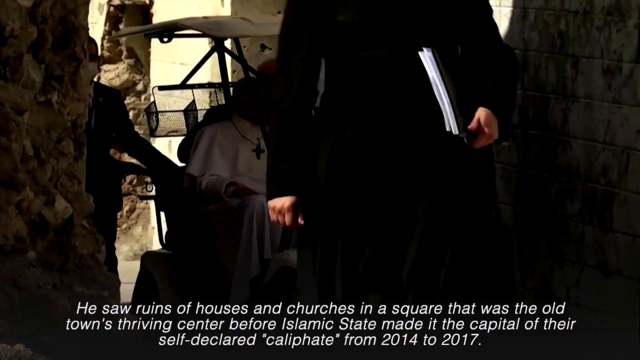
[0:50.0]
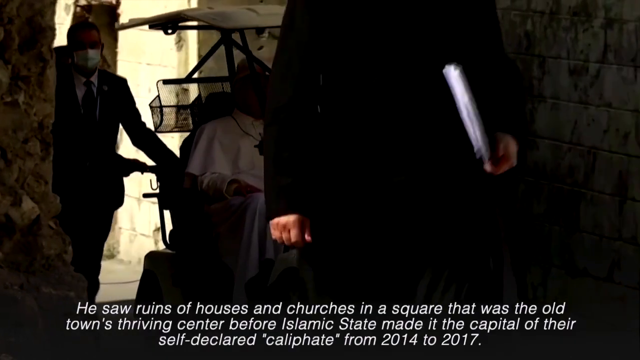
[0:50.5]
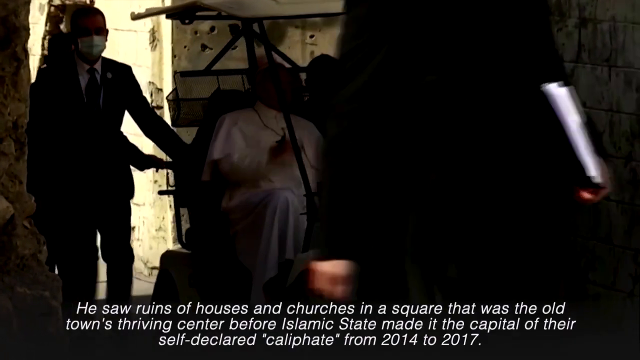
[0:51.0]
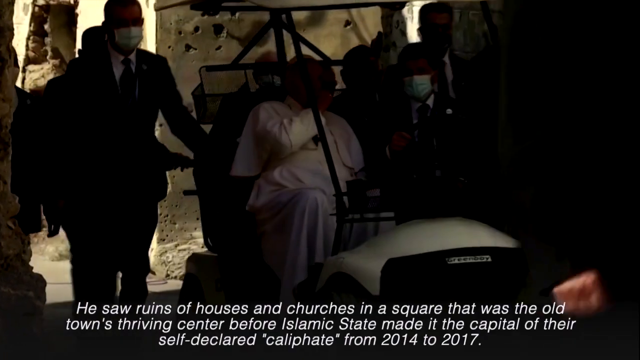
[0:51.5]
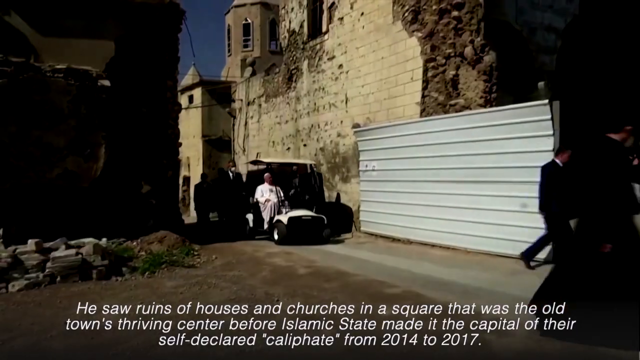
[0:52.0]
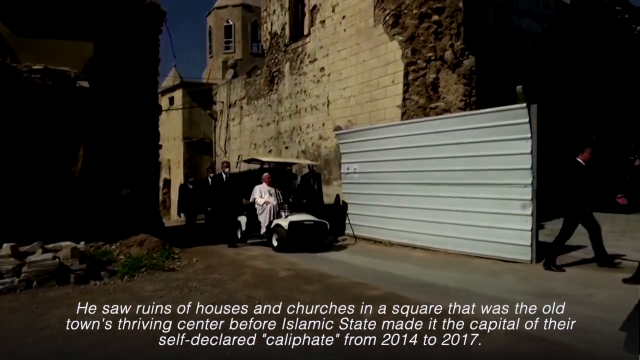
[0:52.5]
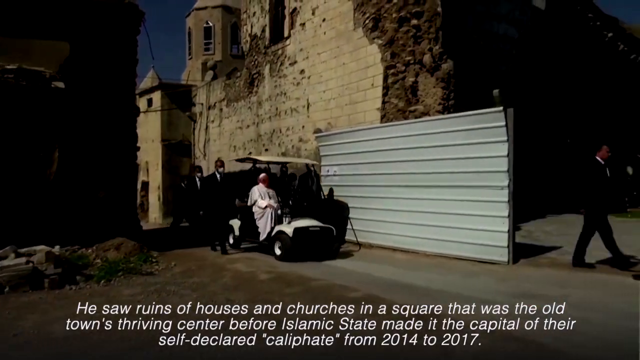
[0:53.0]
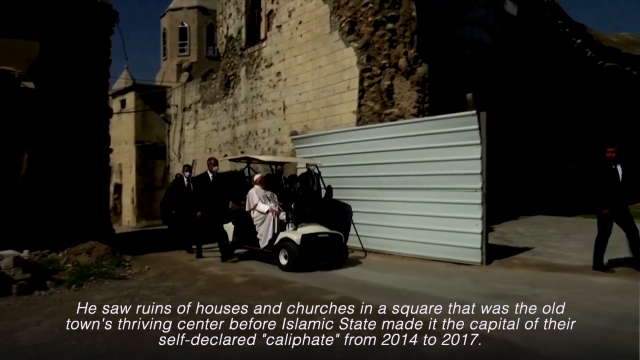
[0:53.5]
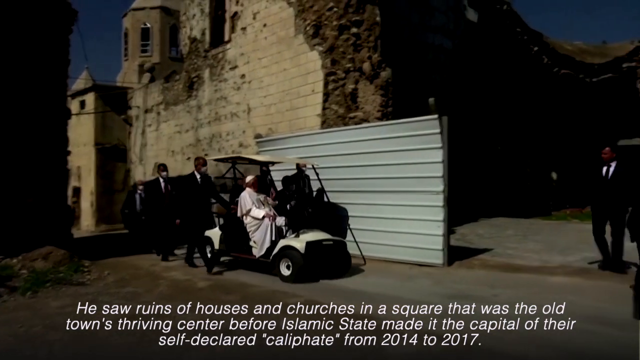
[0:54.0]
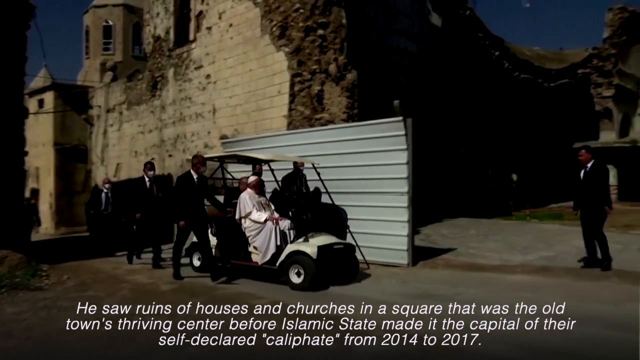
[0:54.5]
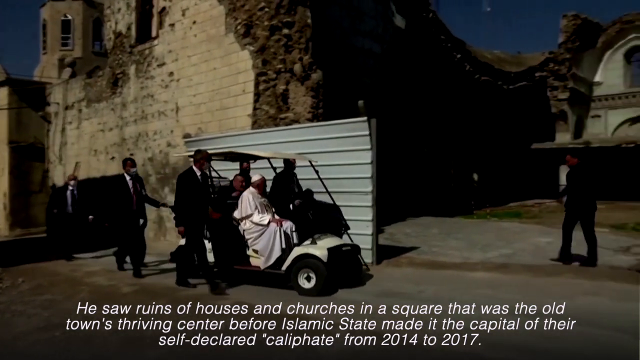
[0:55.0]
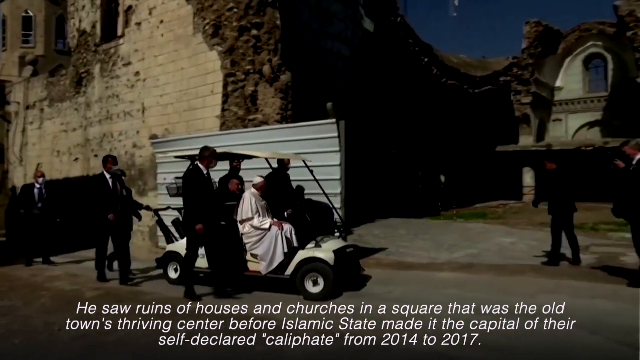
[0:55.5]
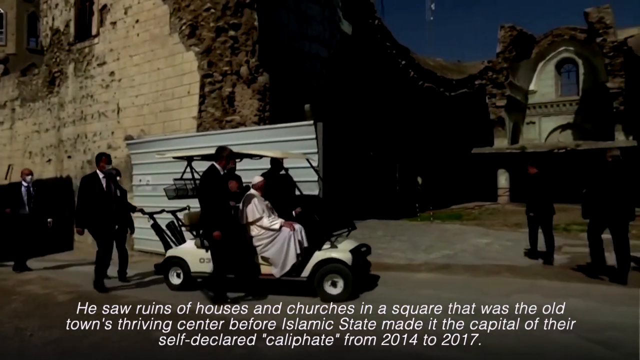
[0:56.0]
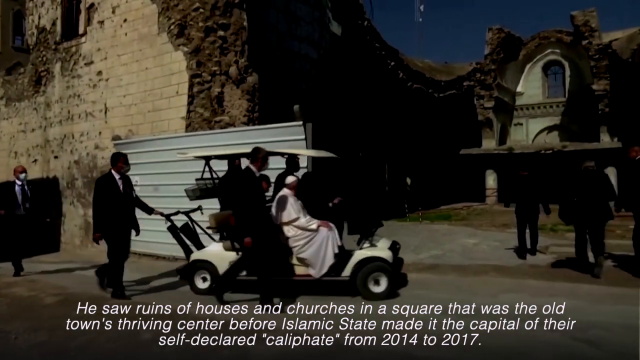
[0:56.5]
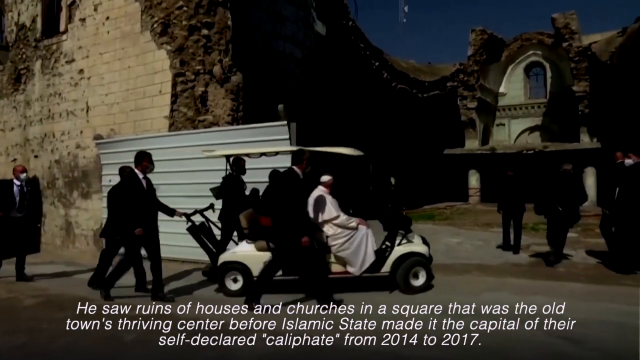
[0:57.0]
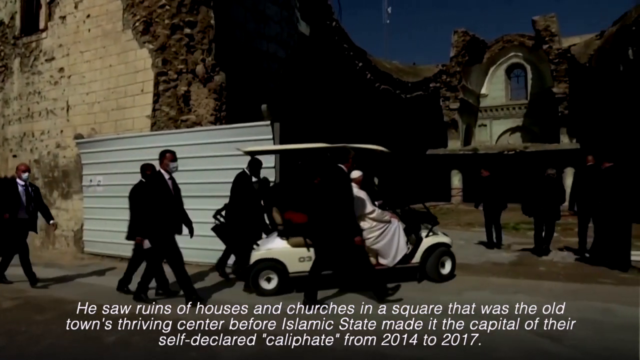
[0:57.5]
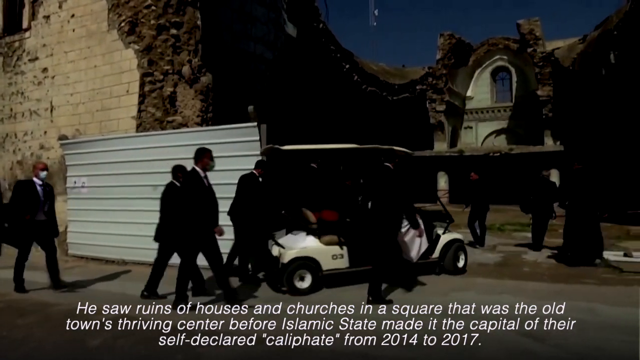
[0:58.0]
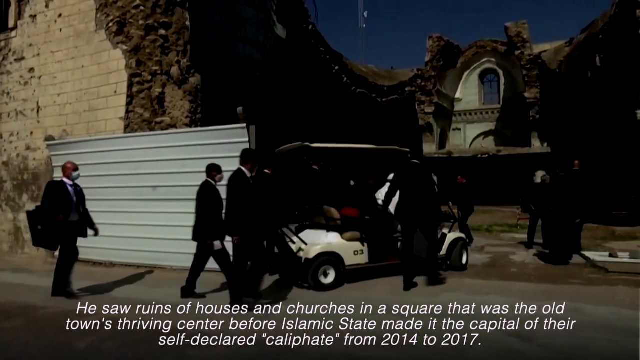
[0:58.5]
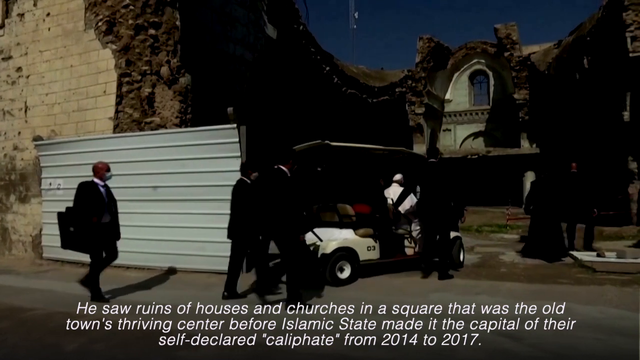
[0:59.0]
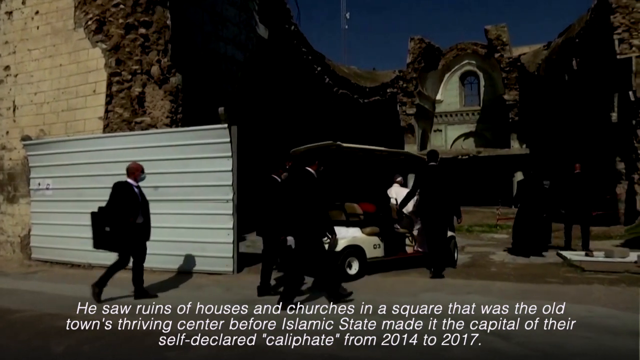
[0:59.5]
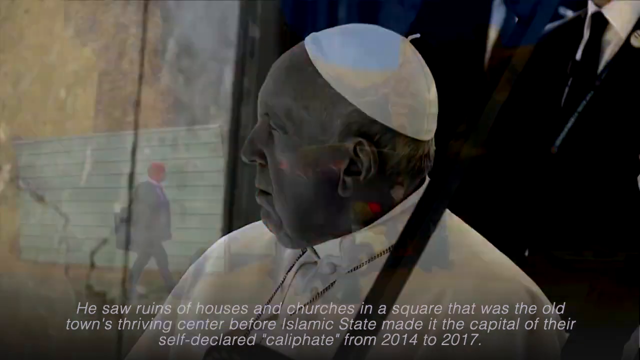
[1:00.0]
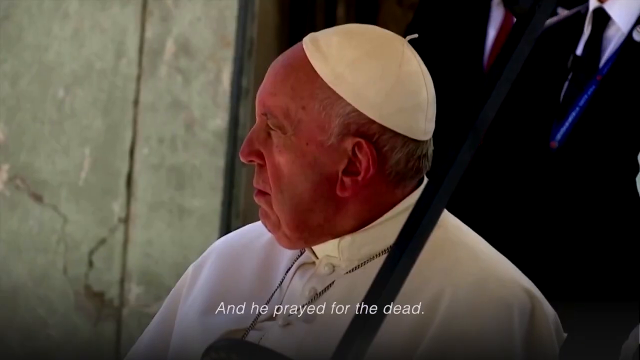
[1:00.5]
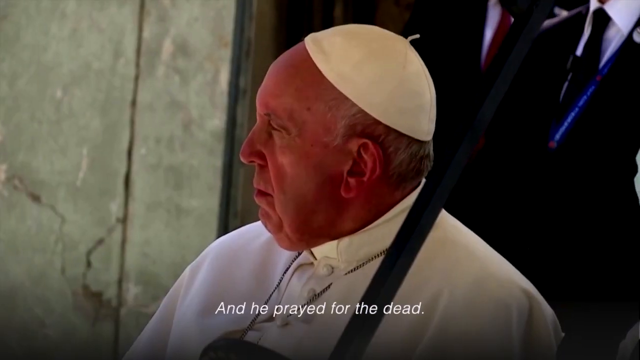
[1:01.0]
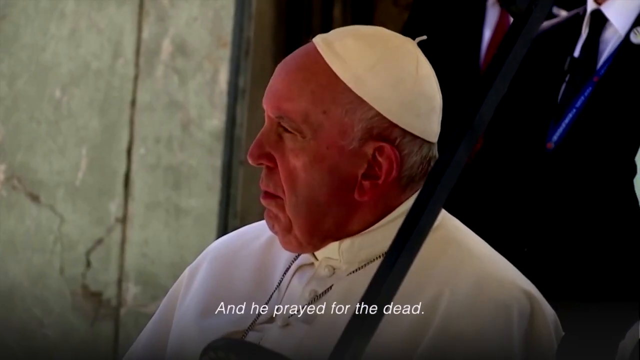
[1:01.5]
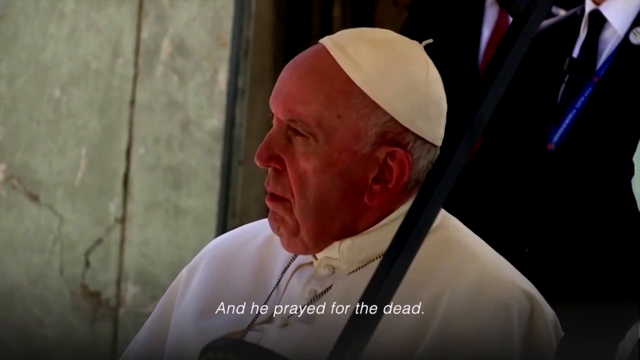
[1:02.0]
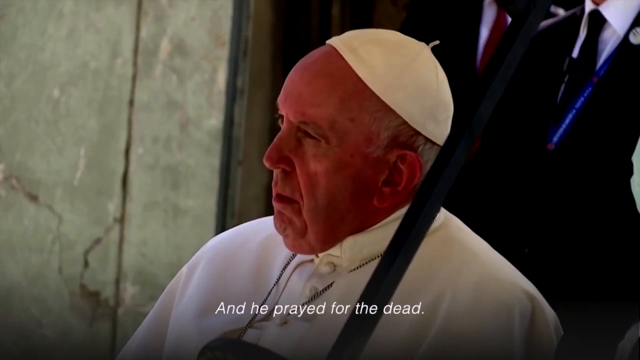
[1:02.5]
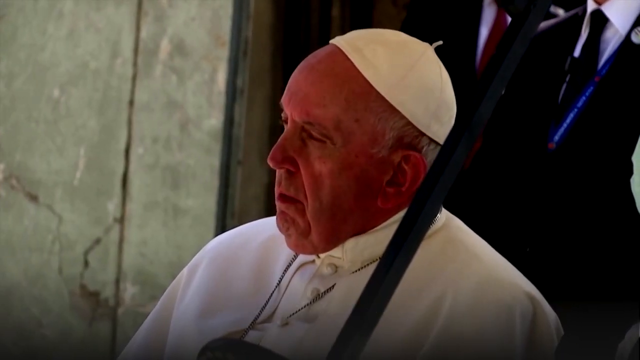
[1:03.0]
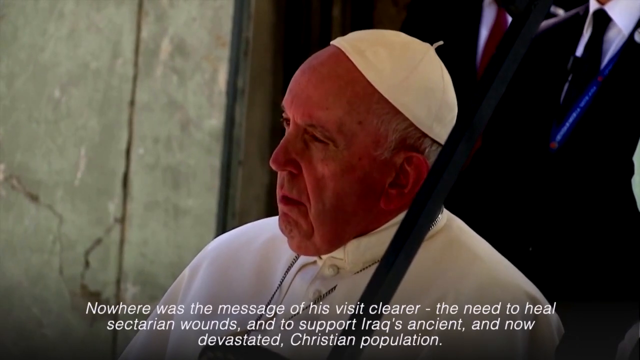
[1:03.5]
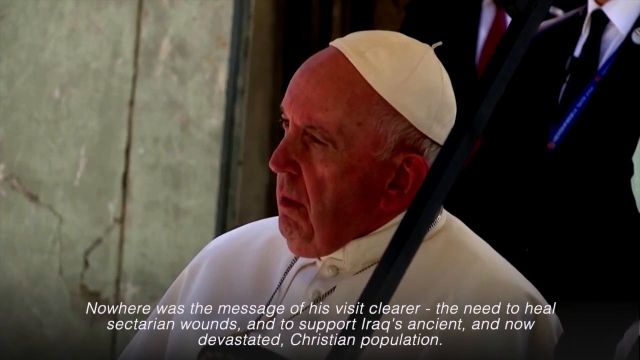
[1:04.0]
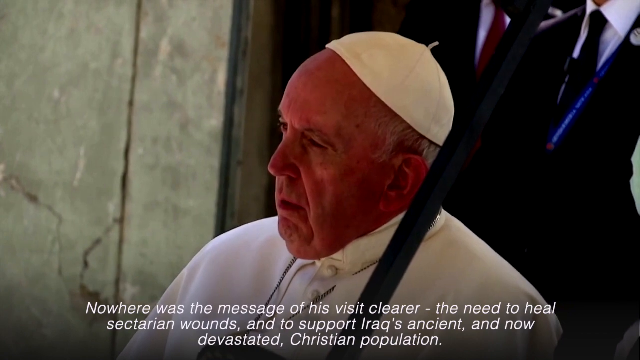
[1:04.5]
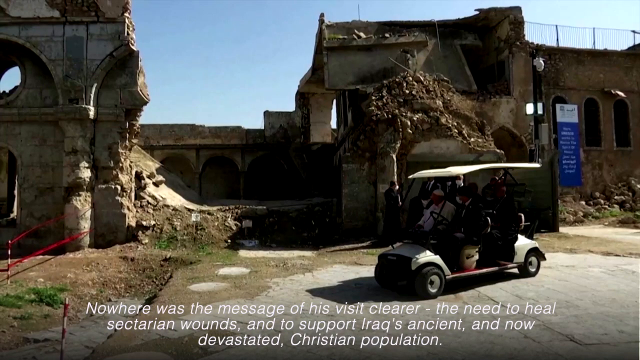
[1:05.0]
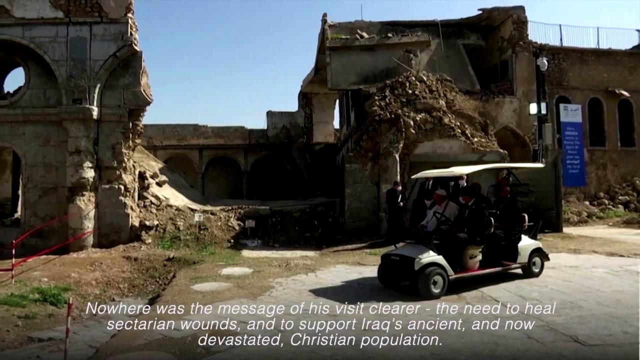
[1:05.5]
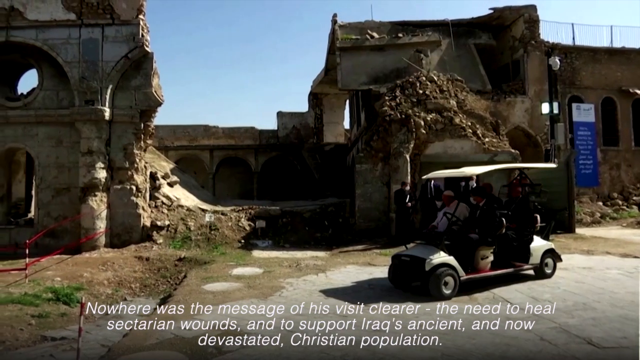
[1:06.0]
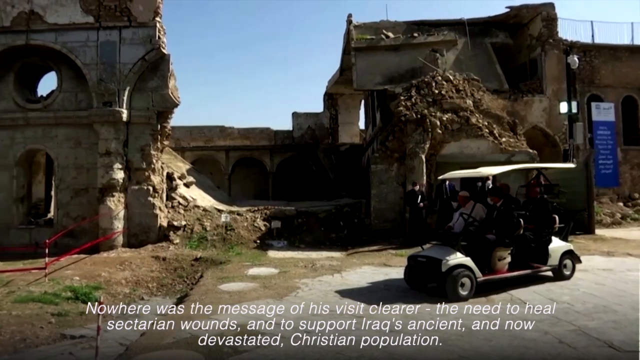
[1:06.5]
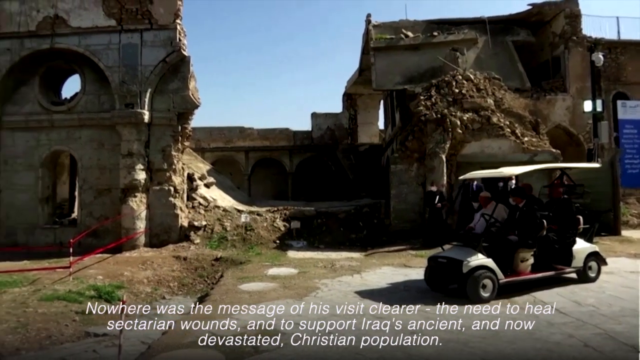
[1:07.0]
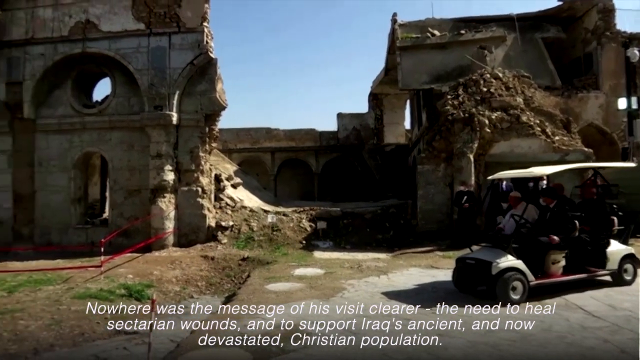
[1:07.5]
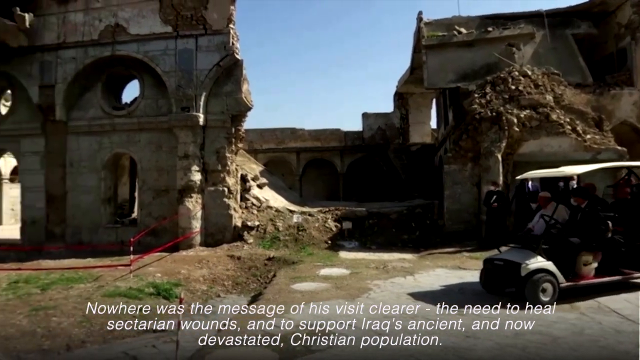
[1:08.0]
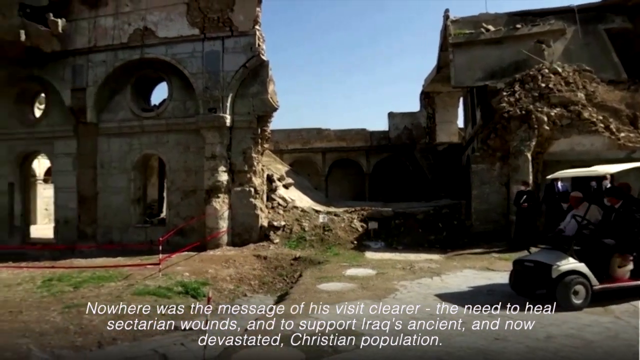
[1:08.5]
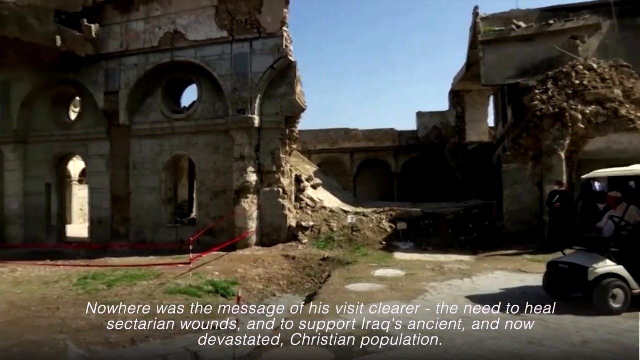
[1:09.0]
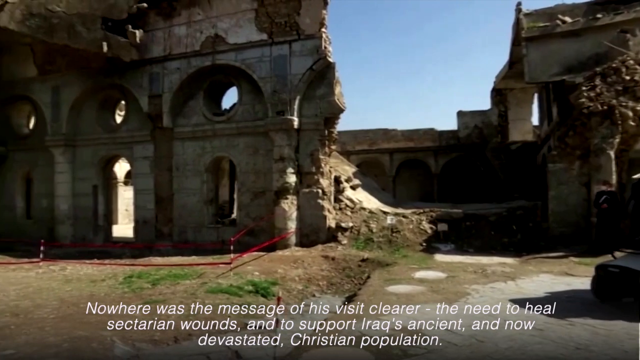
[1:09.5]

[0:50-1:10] Pope Francis rides on a golf cart moving slowly through what looks like a back alley or a small street. He is surrounded by men in black suits with white dress shirts and ties, members of his security team, who stay around him pretty much at all times, and he appears to be kind of getting a tour of the area. The buildings look like the ruins of a city, probably very old historical buildings that have either been bombed or otherwise damaged; it is unclear whether the damage is recent or the place is more of a historical site. Text on the screen suggests that the Islamic State might be responsible. Pope Francis observes the buildings, looking concerned and contemplative as he surveys the damage. He stays sitting in the golf cart the whole time, even as it pulls to a stop toward the end.